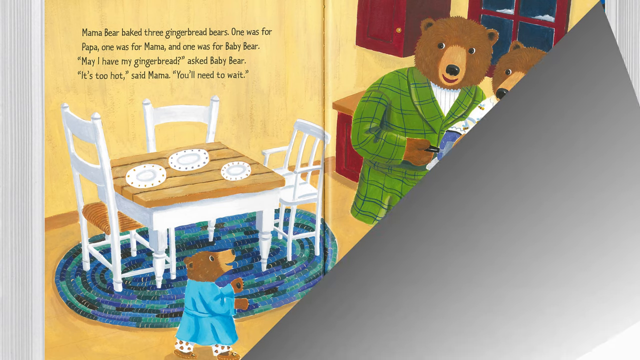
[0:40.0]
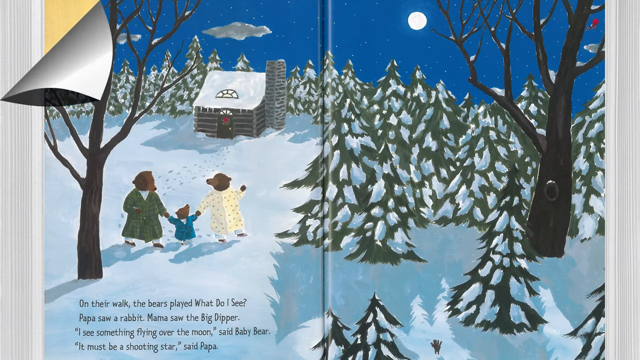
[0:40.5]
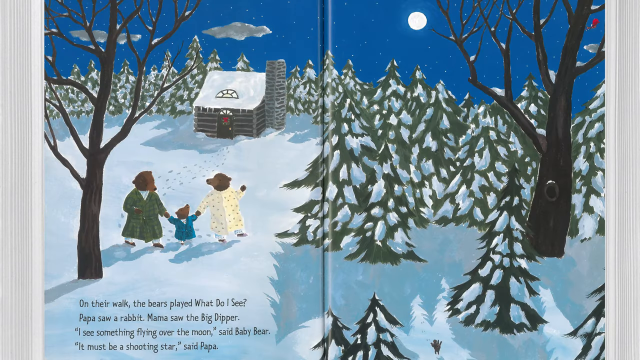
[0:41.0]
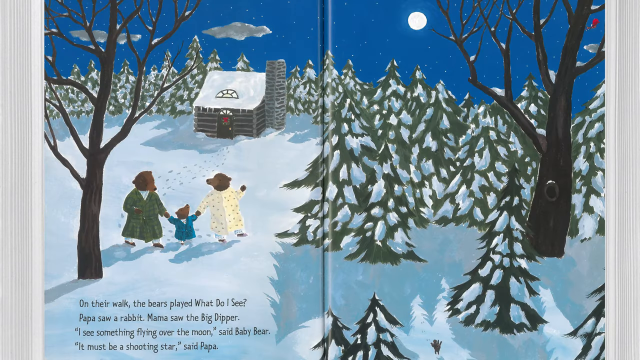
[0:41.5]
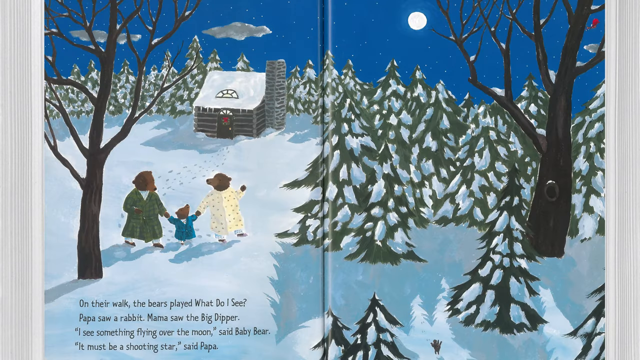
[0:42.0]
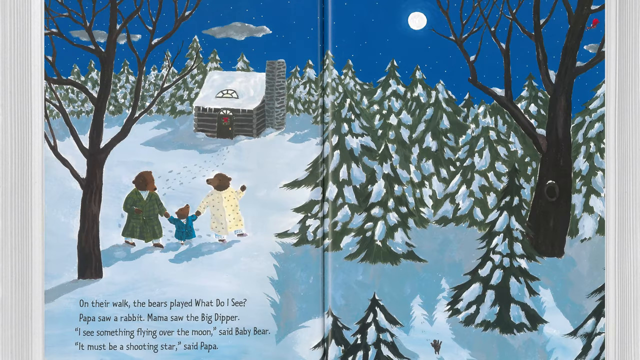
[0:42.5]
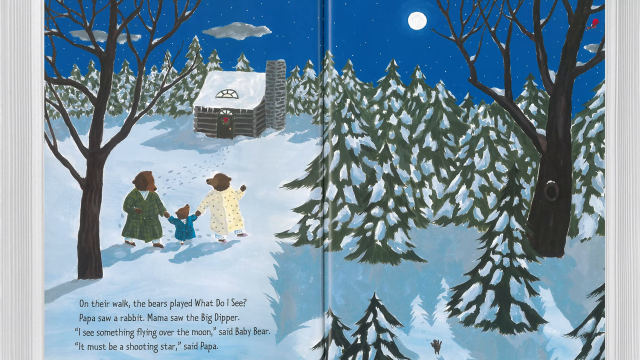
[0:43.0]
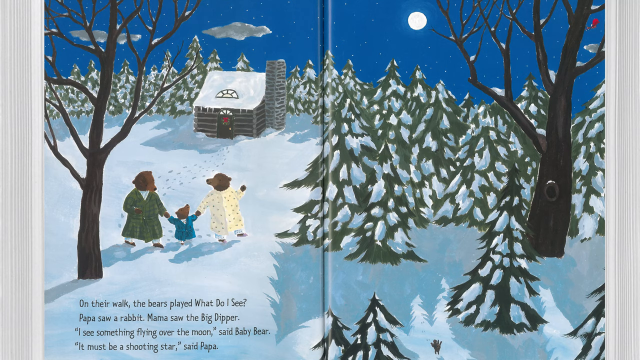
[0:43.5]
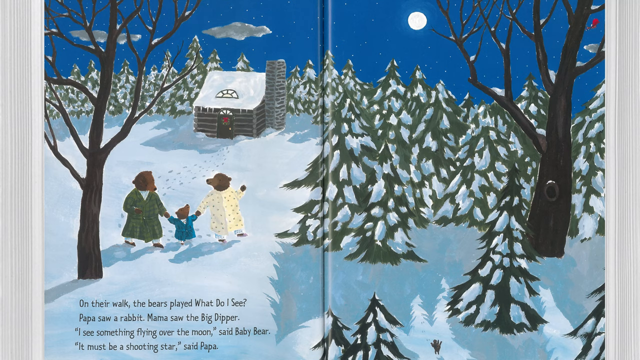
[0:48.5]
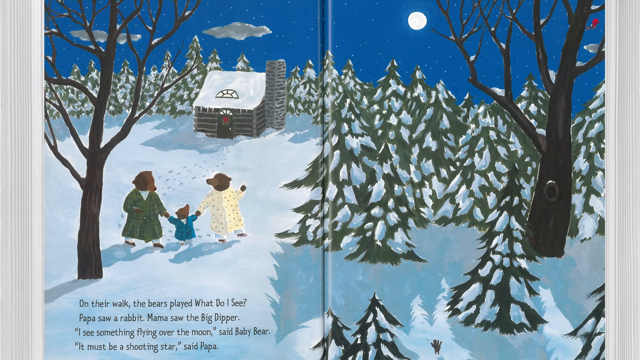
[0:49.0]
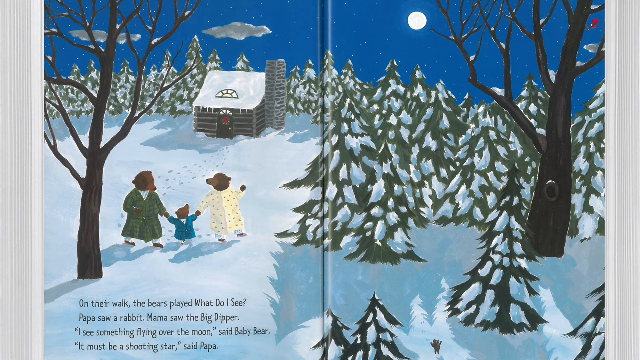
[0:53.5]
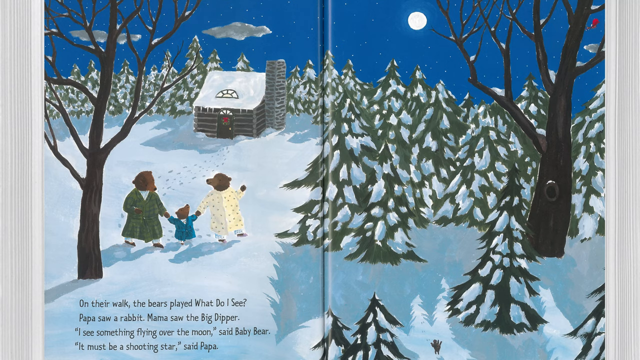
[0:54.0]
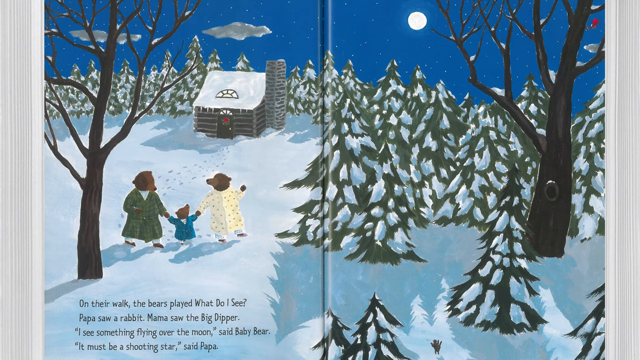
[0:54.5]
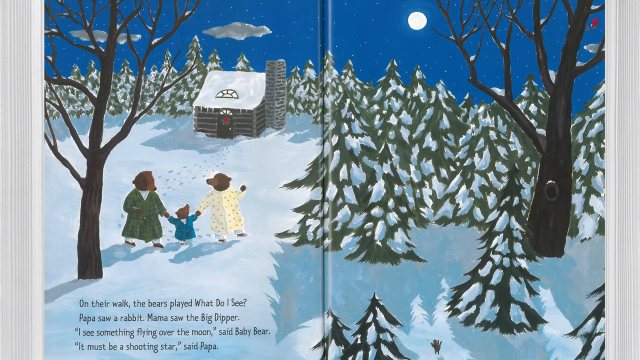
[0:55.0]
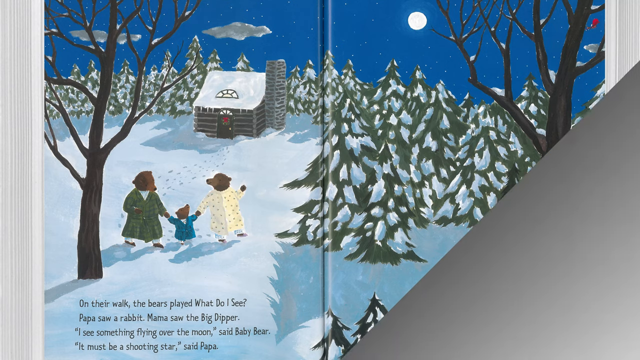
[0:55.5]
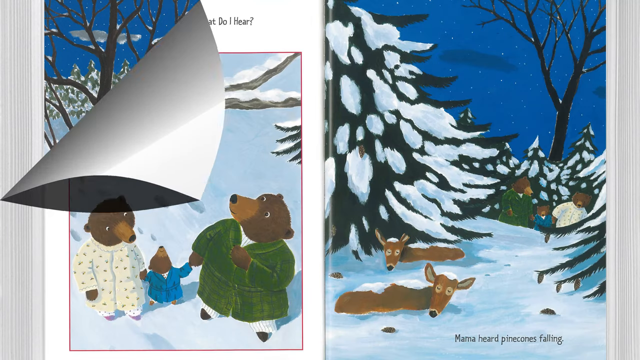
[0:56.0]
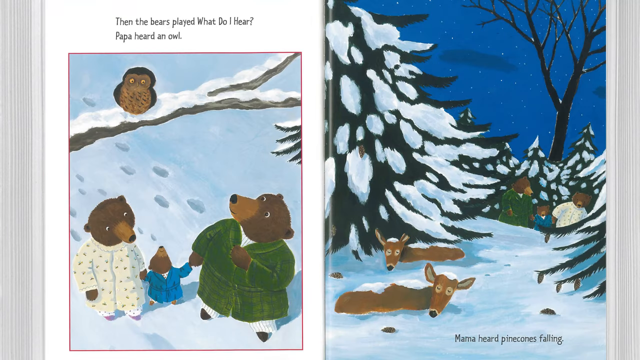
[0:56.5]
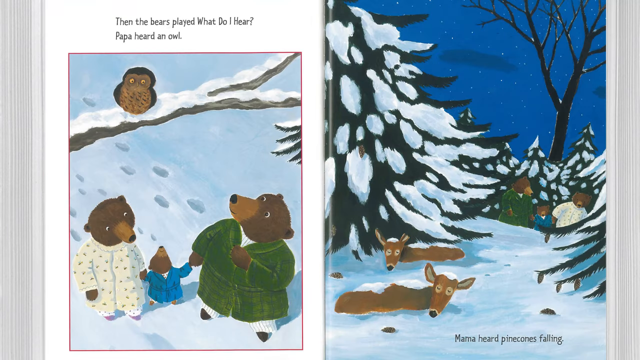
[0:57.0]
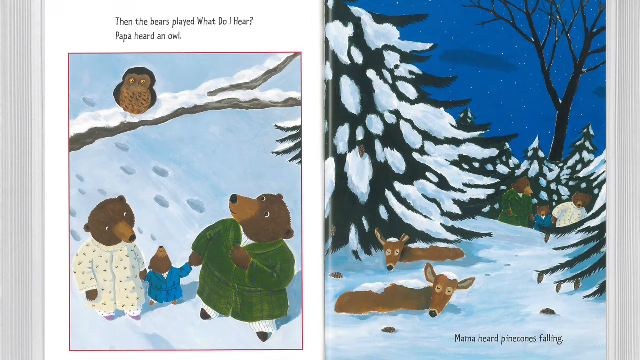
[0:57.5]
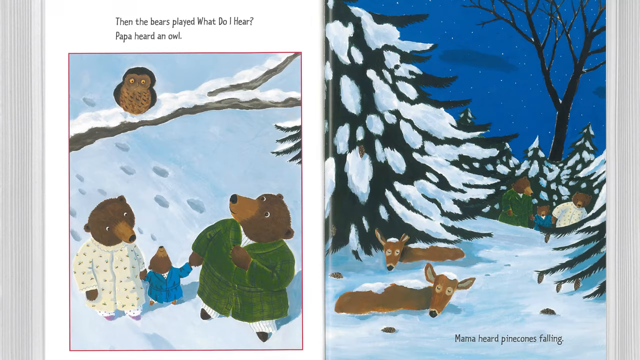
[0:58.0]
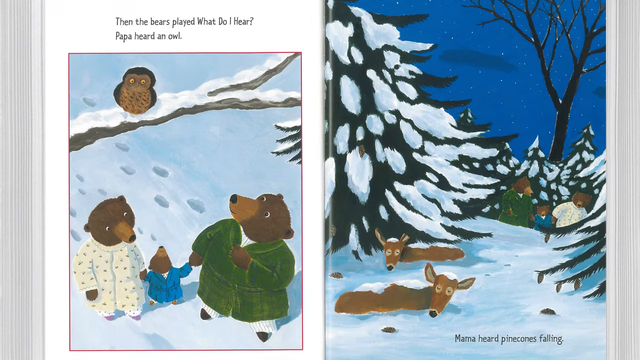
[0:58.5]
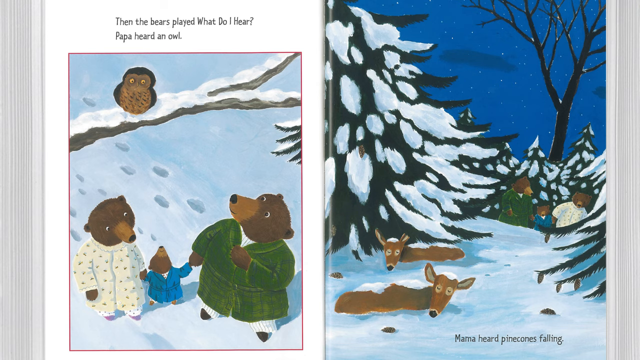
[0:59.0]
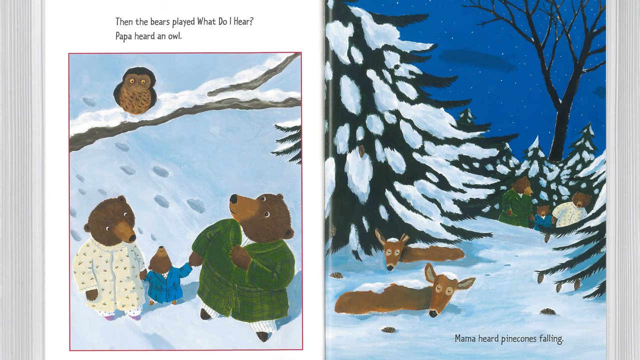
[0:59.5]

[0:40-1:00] The next page shows the bear family going on a walk at night. On their walk the bears play "What do you see?": Papa Bear saw a rabbit, Mama saw the Big Dipper, and Baby Bear says, "I see something flying over the moon," to which Papa says, "It must be the shooting star." In the drawing, the little lodge is surrounded by many Christmas trees, and there are two very tall trees. There is a bright moon, lots of little stars, some dark clouds, and something red flying across the sky, though it is very small. Then the bears play "What do you hear?": Papa heard an owl. On this page the bear family looks up at a tree where an owl is perched on a branch. The bear family also sees two deer sleeping on the snow as they walk through the Christmas tree forest.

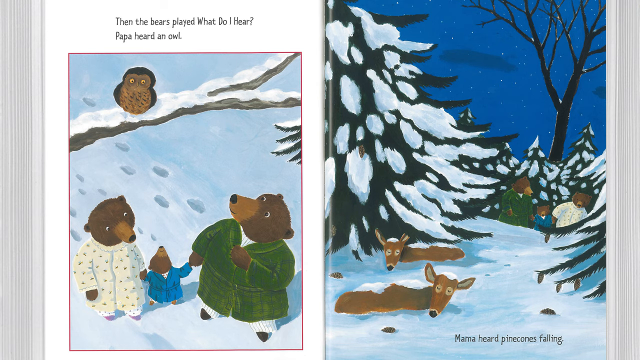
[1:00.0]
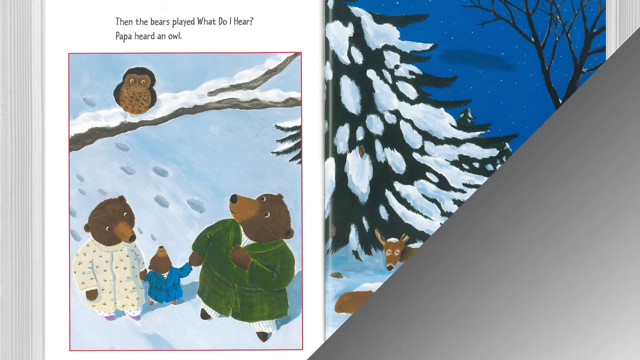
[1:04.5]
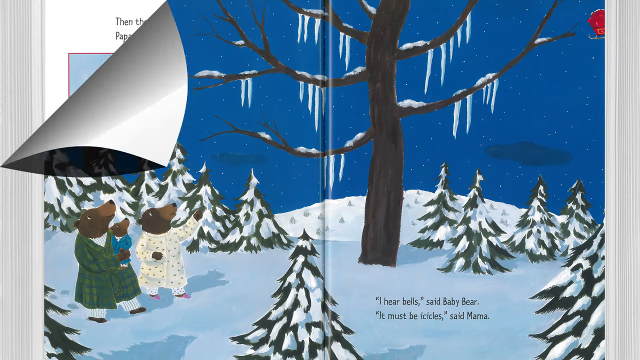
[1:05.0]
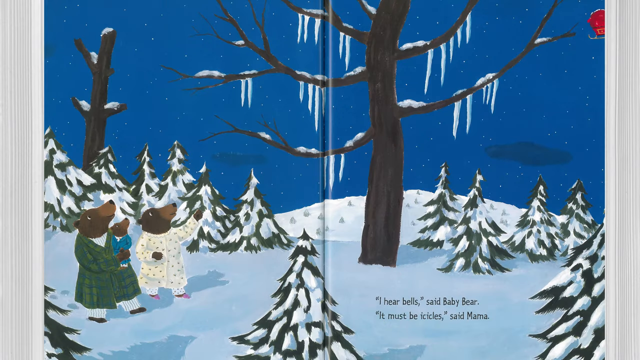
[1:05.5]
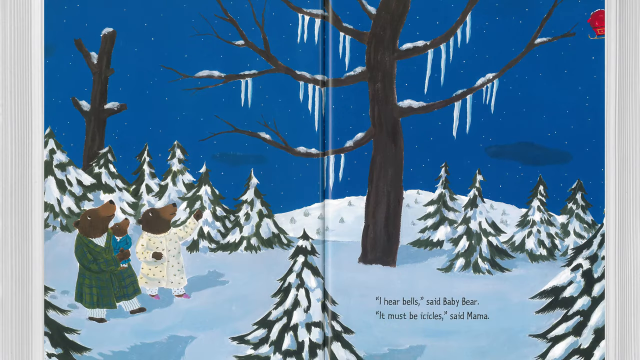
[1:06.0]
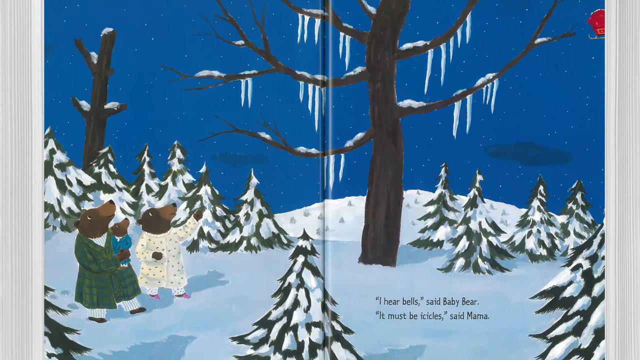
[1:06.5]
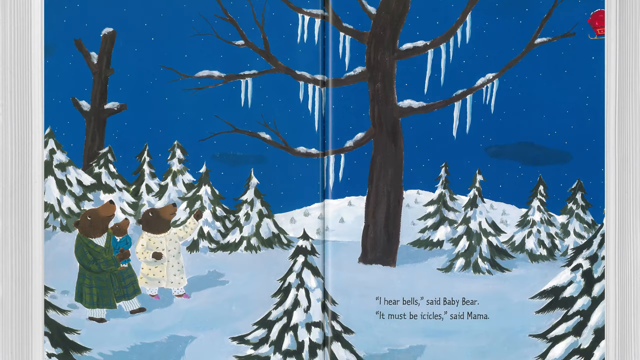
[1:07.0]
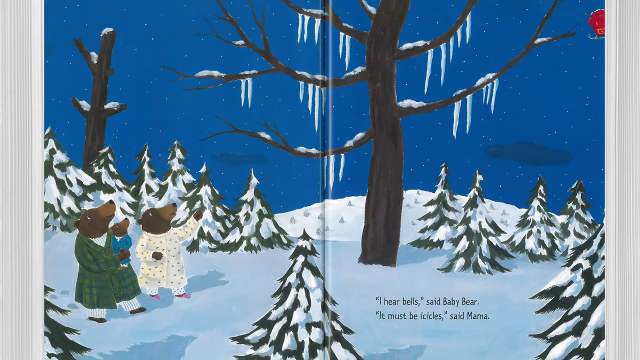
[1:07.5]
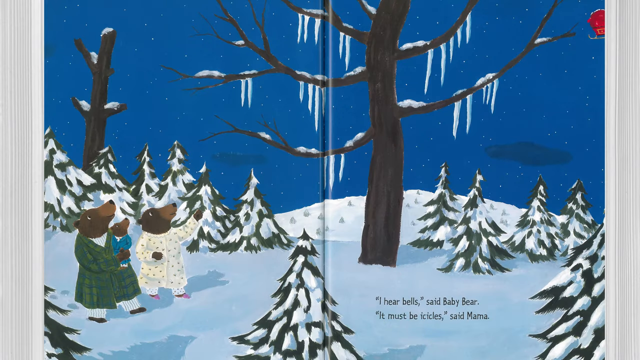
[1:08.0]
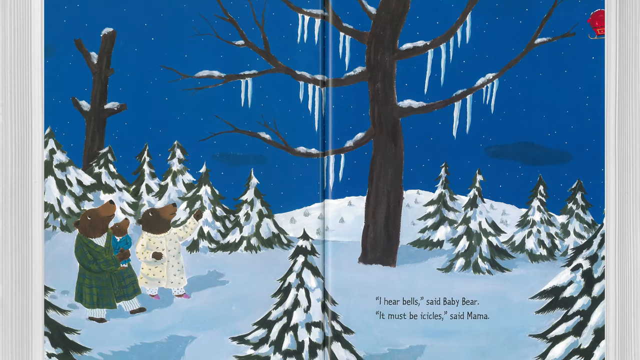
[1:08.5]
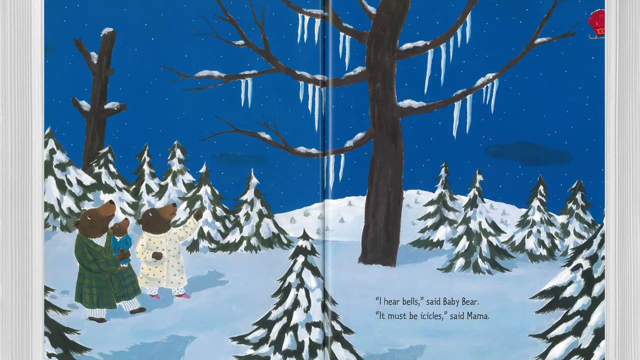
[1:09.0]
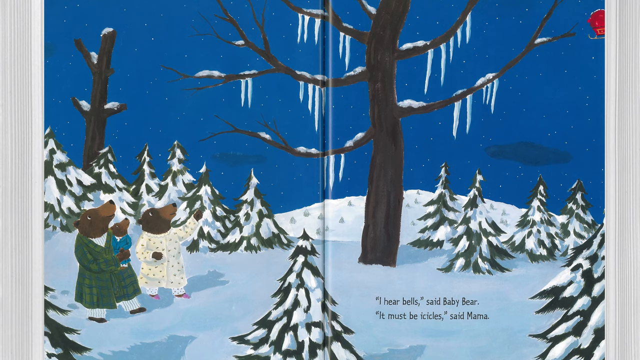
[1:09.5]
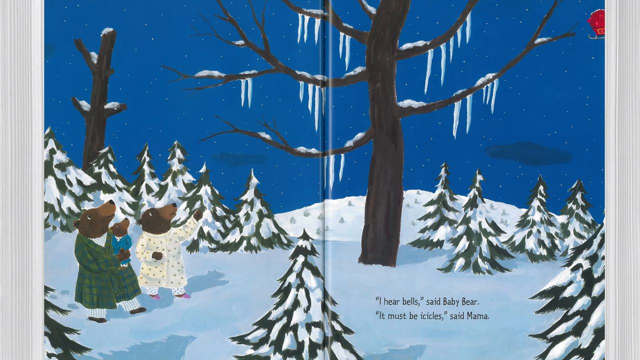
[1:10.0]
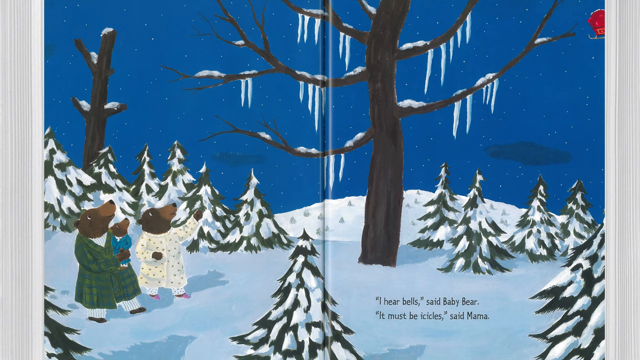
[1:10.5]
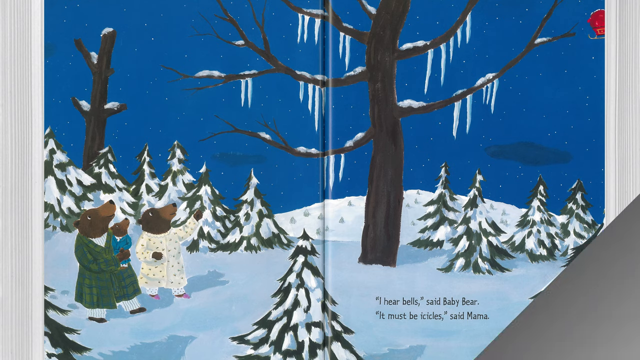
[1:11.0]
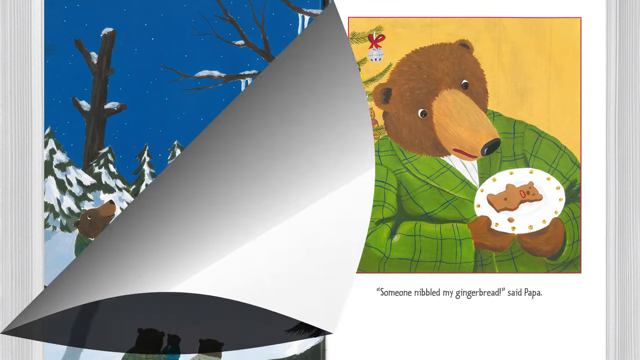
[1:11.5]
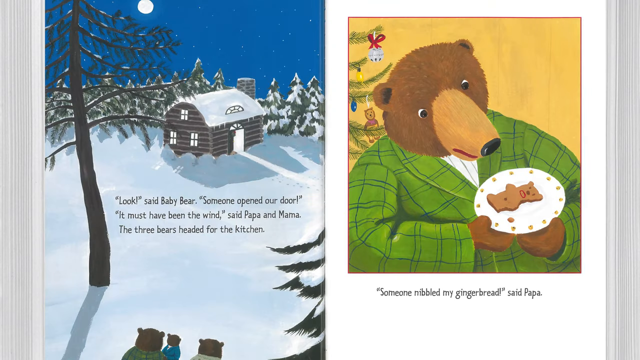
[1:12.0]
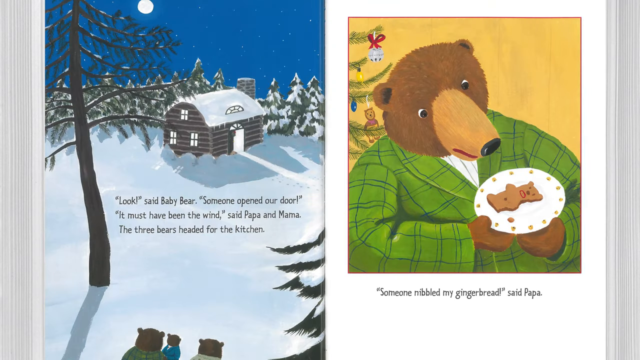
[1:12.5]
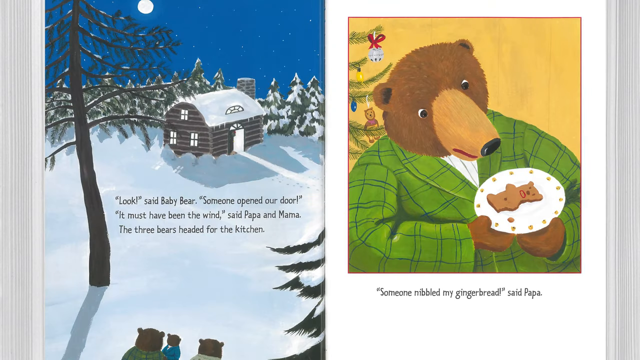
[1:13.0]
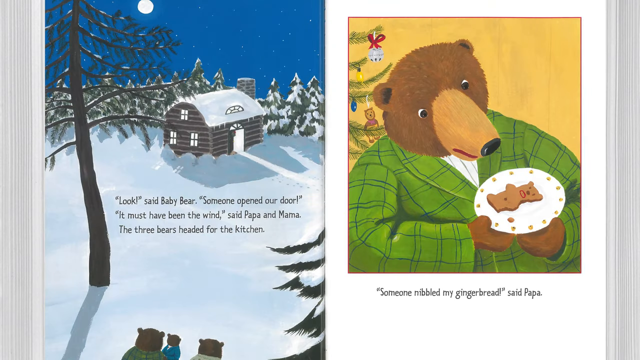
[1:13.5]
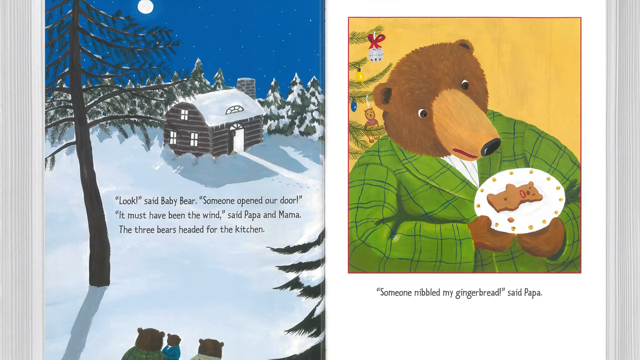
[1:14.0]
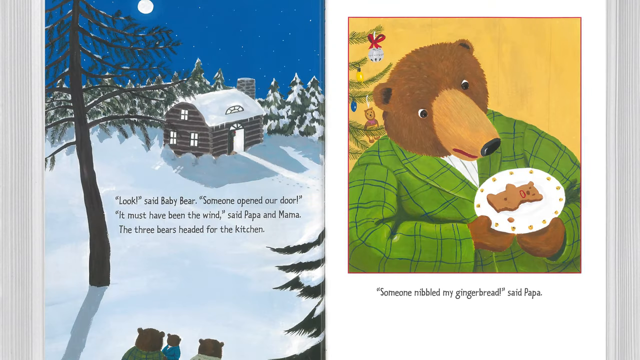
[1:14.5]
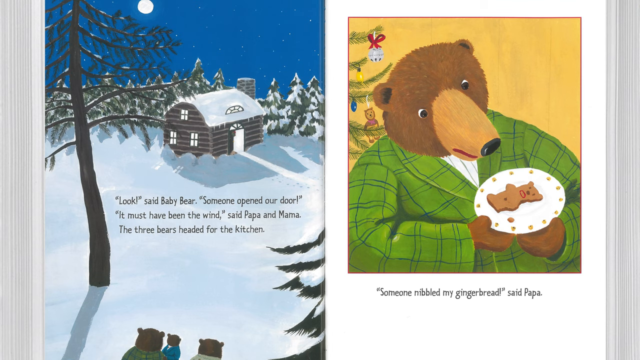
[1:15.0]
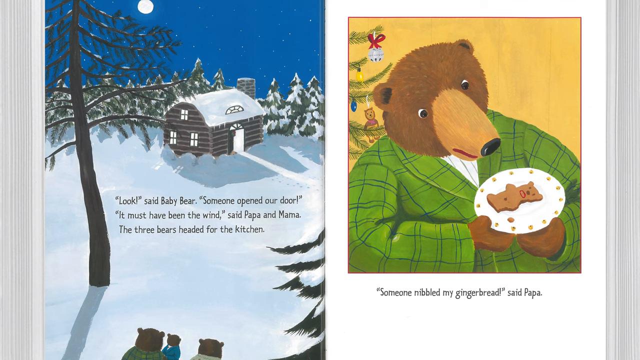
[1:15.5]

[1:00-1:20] On the next page the bear family continues to walk. Mama Bear is pointing at the sky, perhaps toward a red object flying in the sky, and Papa Bear is holding Baby Bear in his arm. "I hear bells," says Baby Bear. "It must be the icicles," says Mama. Many Christmas trees surround them, along with some big trees with no leaves, only snow and icicles on the branches. "Someone opened our door," says Baby Bear. "It must have been the wind," say Papa and Mama, and the three bears head for the kitchen. The little wooden lodge appears with the three bears coming back to the house, which they see in the distance with its door open. In the next scene Papa Bear holds his plate with the little gingerbread on it and says, "Someone nibbled my gingerbread."